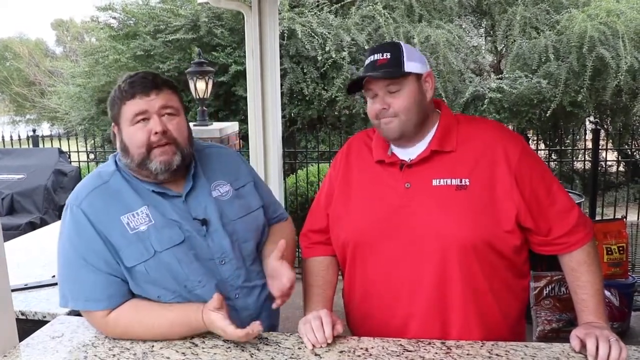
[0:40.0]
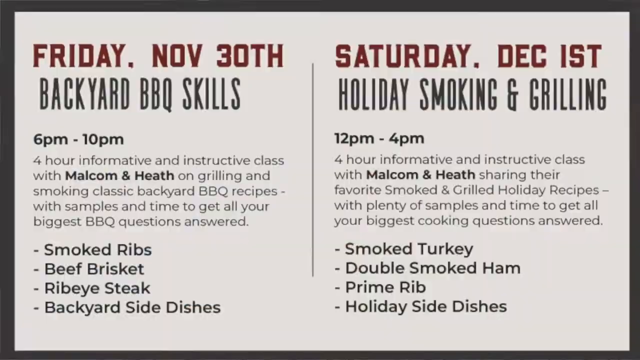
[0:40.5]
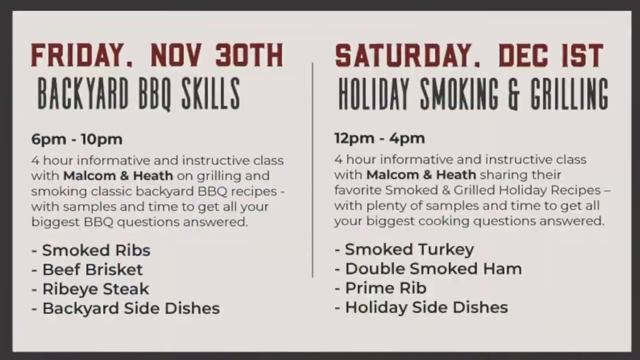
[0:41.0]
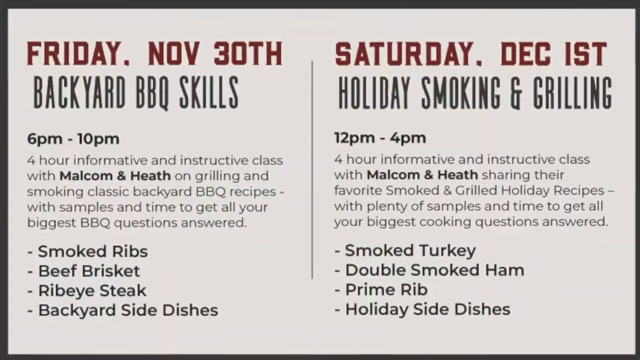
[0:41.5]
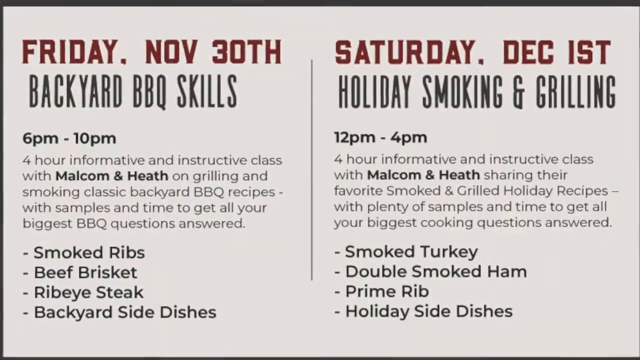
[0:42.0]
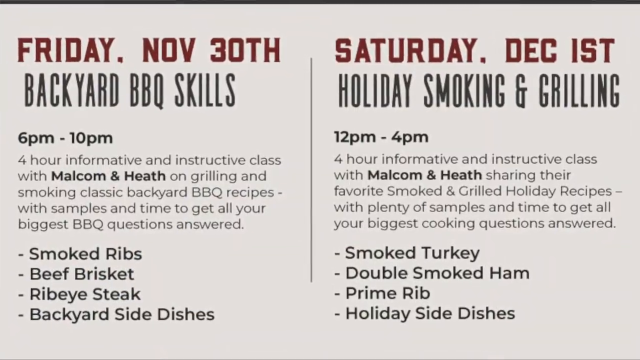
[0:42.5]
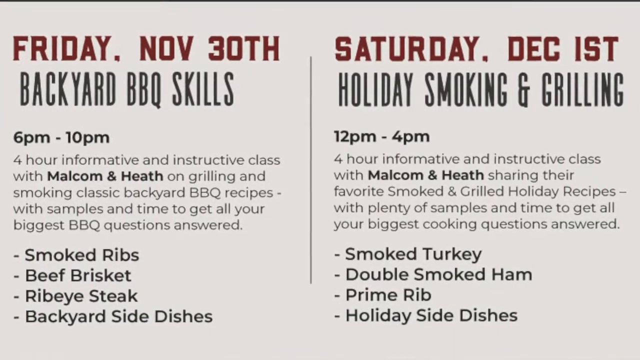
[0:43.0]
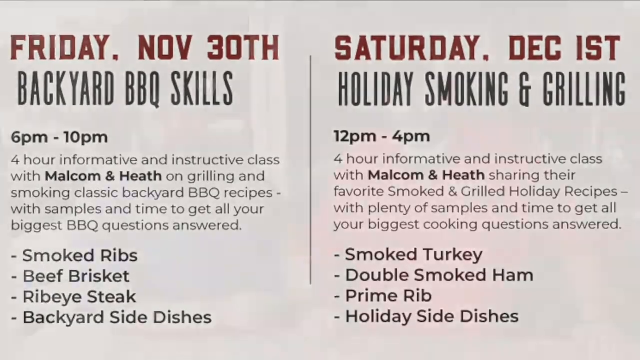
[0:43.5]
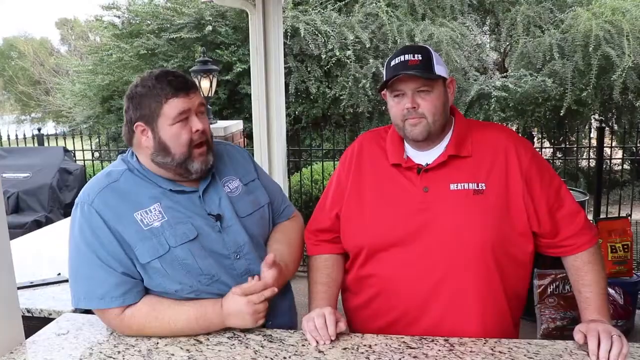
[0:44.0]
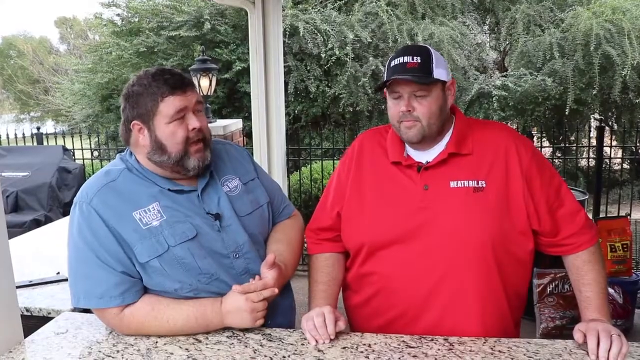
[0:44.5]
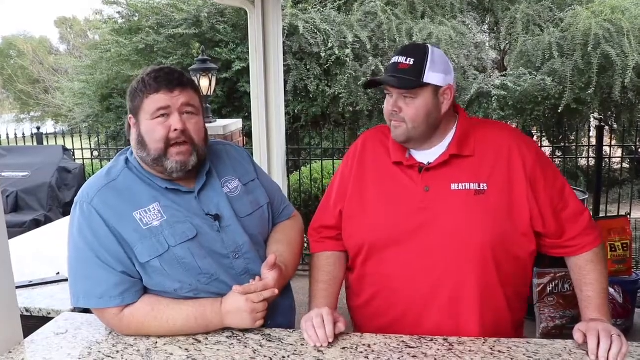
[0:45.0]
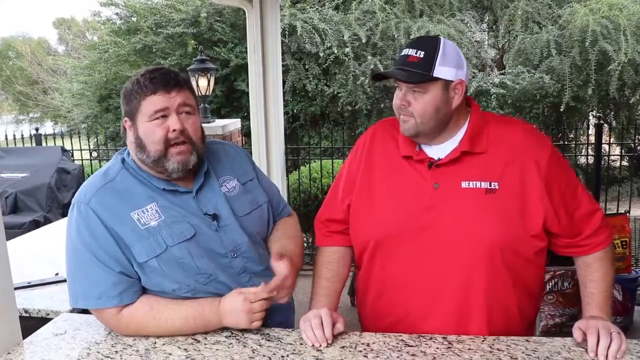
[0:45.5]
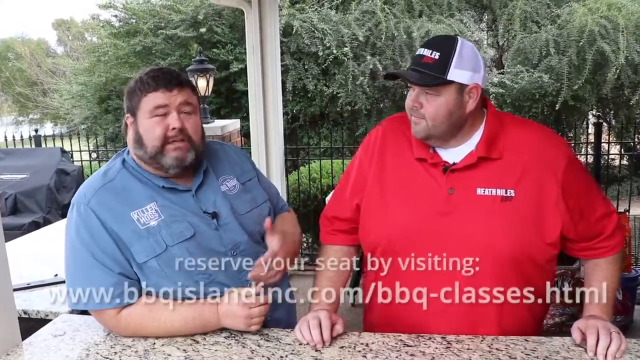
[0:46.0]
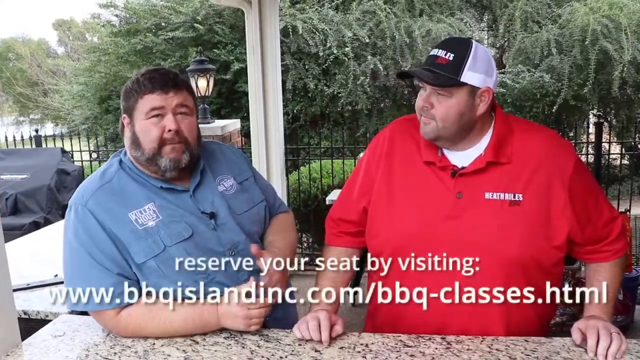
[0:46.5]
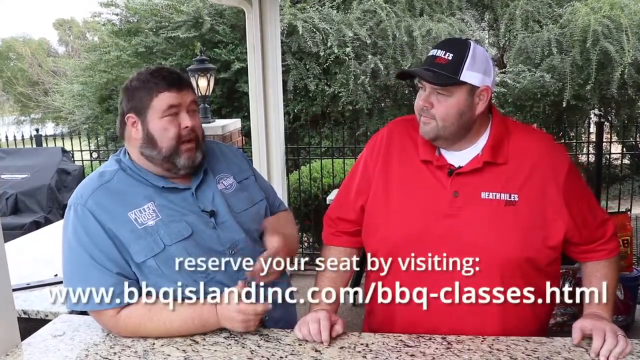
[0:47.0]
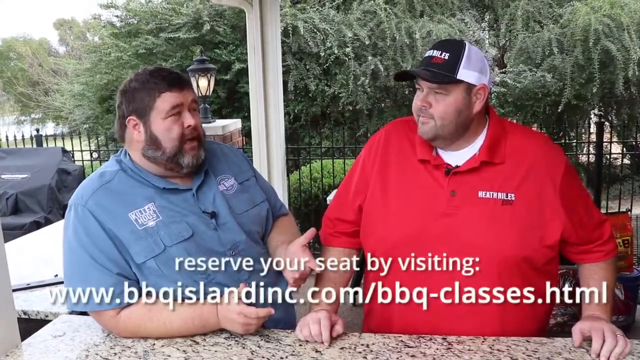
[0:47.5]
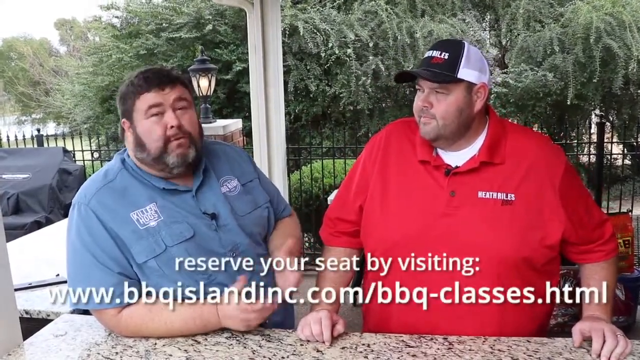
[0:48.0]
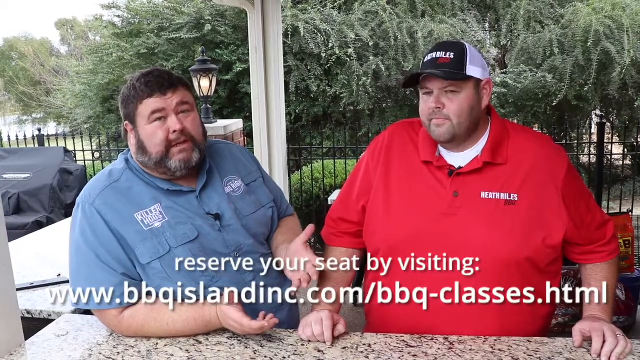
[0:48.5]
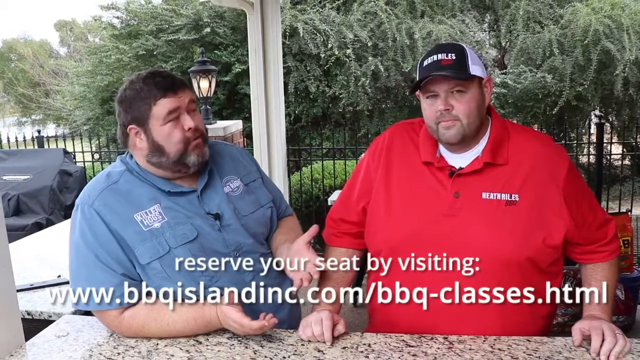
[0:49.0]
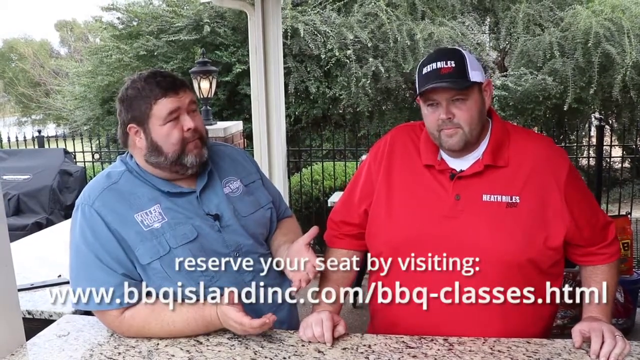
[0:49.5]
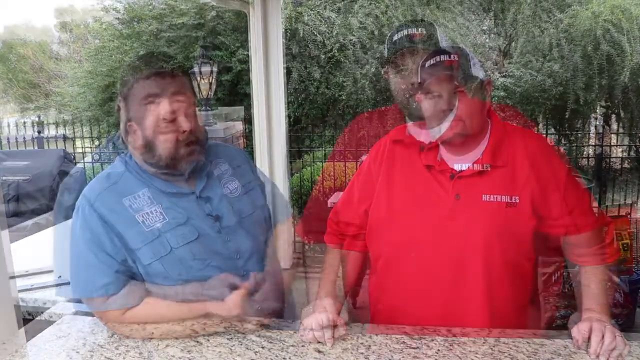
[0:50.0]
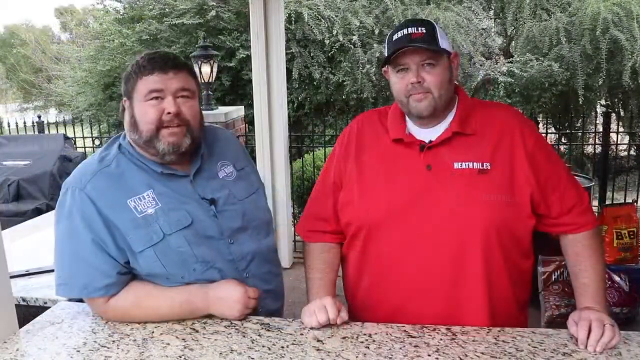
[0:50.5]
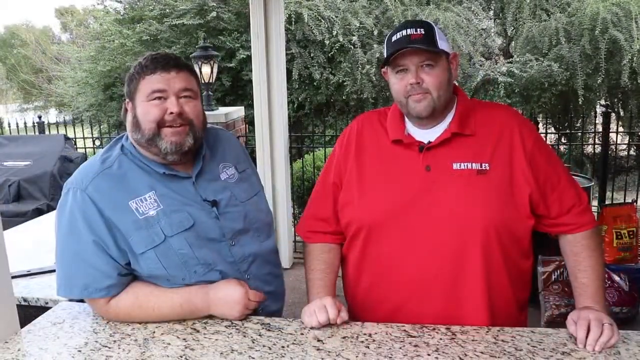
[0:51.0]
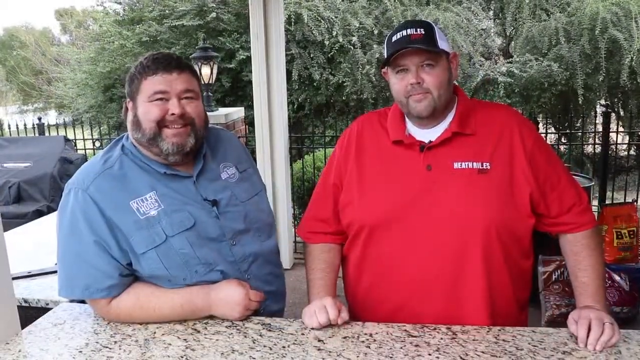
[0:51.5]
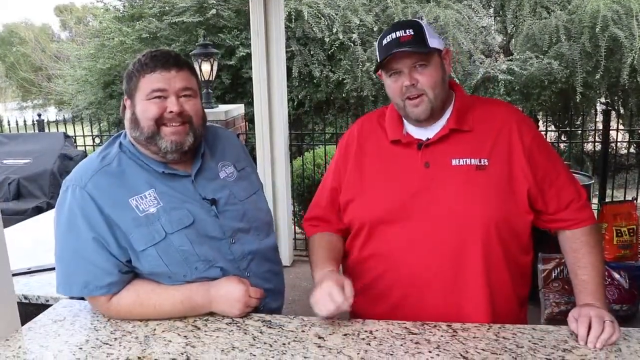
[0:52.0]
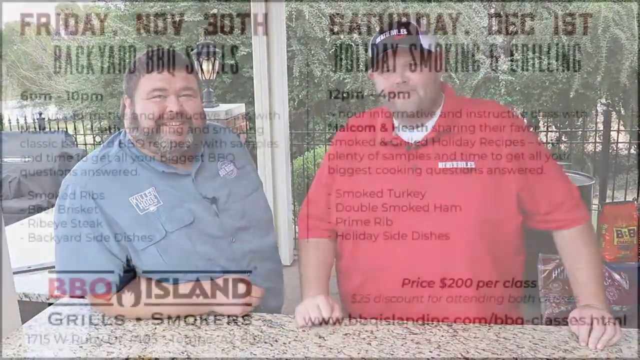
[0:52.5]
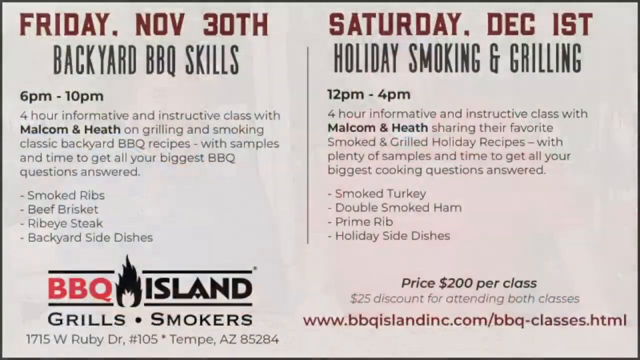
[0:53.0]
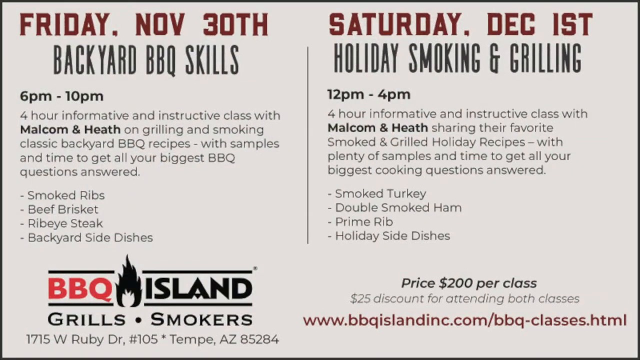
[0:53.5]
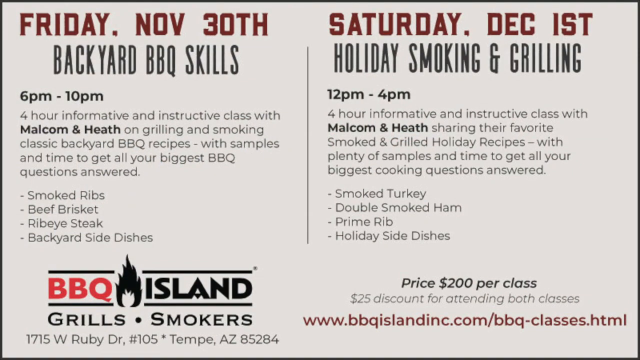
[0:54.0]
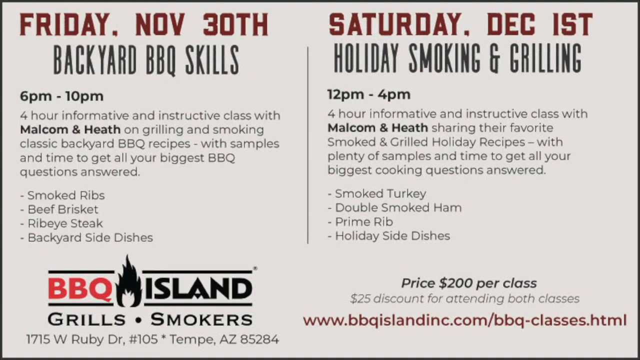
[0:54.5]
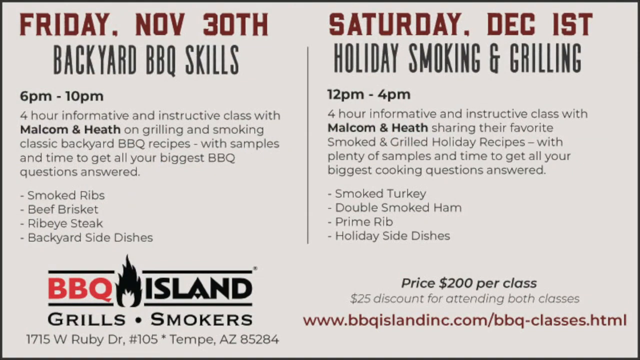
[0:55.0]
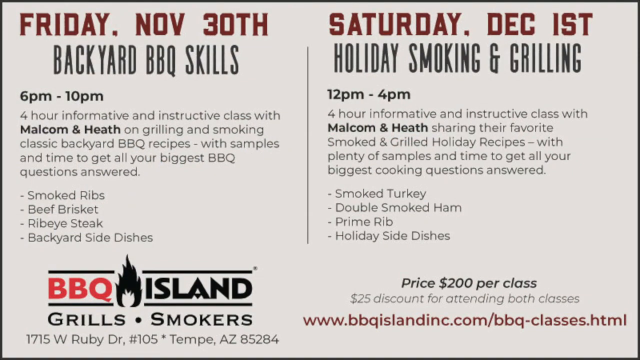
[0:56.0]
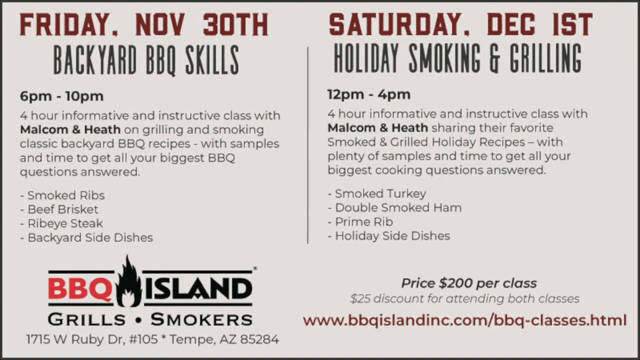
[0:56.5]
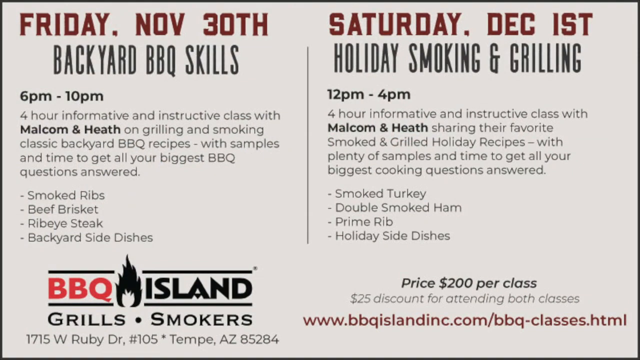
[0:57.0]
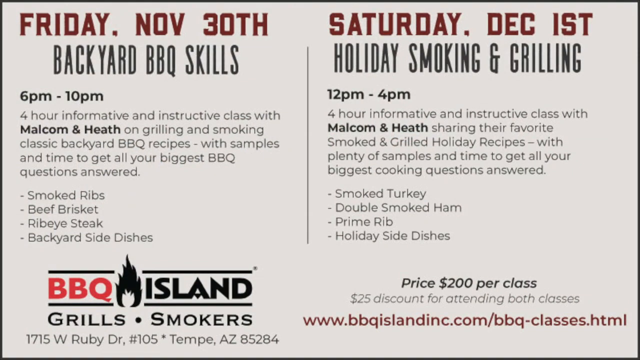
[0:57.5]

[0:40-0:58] Two men stand in front of the camera and look very excited. The man on the right-hand side wears a red golf shirt with a white t-shirt underneath and a cap. The man on the left-hand side wears a blue collared shirt and has short brown hair and a brown and white beard. The men seem to be talking about grills. Next comes a poster that looks like it lists upcoming events. On the left-hand side, one says "Friday, November 30th, Backyard BBQ Skills" from 6 pm to 10 pm, with a list of meats: "Smoked Ribs, Beef Brisket, Ribeye Steak, and Backyard Side Dishes". On the right-hand side, one says "Saturday, December 1st, Holiday Smoking and Grilling" from 12 pm to 4 pm, with a list of meats for that day: "Smoked Turkey, Double Smoked Ham, Prime Rib, and Holiday Side Dishes". The shot then returns to the two men speaking about the events, and a white link pops up at the bottom that says "reserve your seat by visiting the website".